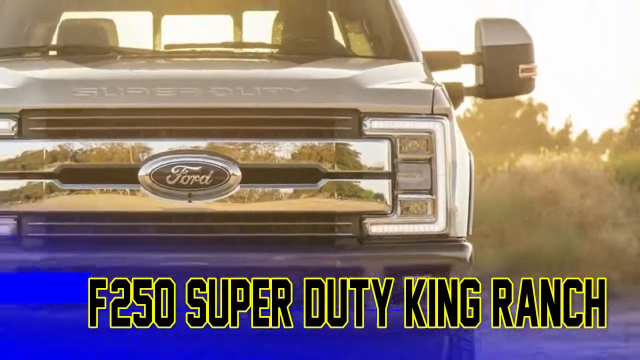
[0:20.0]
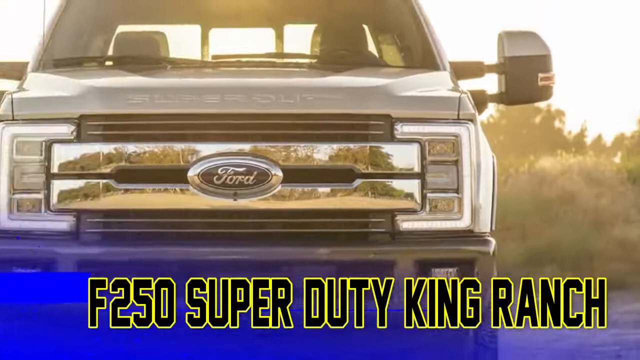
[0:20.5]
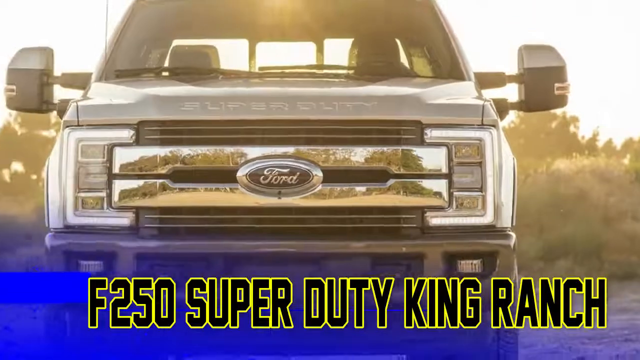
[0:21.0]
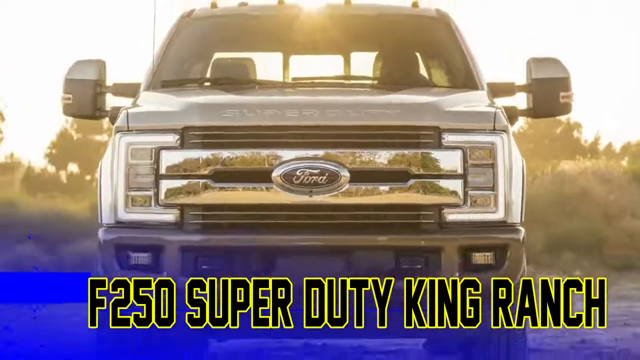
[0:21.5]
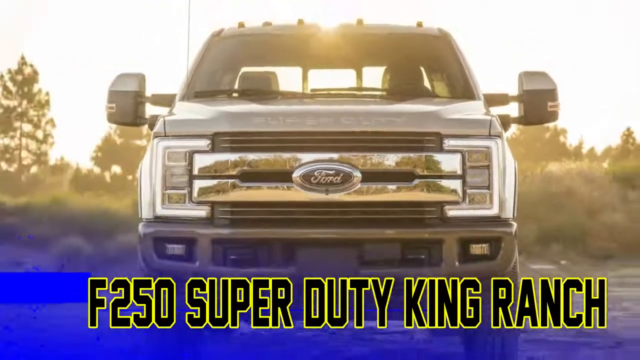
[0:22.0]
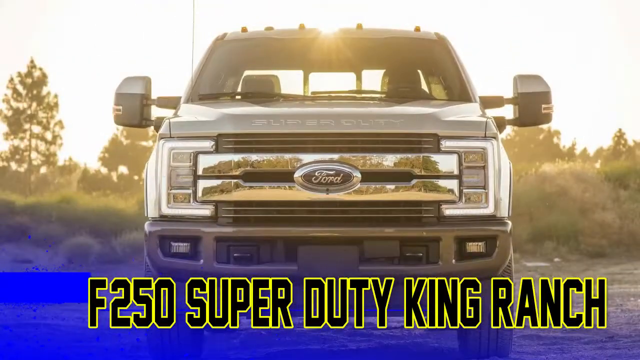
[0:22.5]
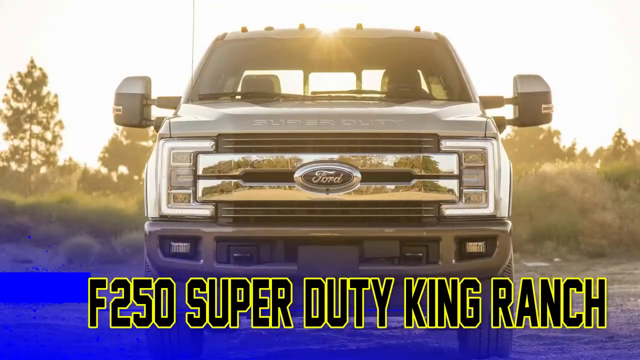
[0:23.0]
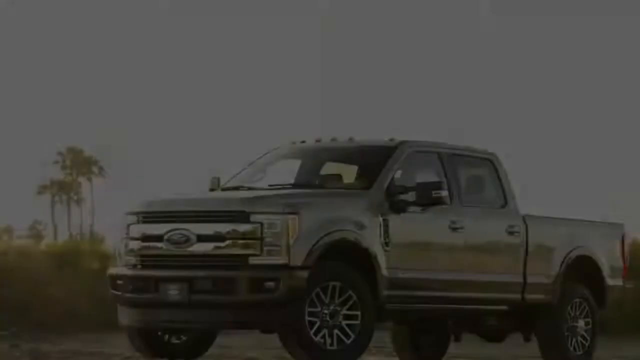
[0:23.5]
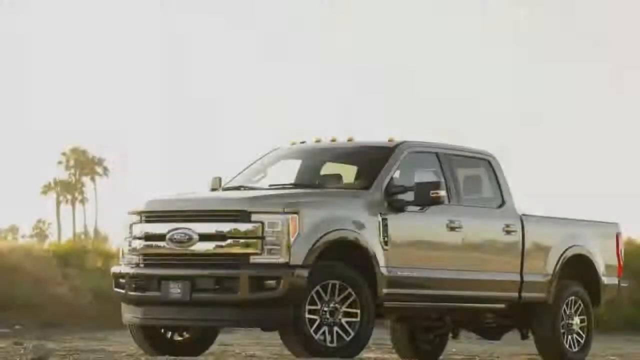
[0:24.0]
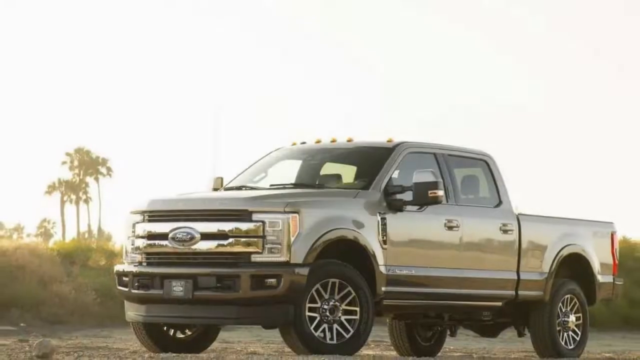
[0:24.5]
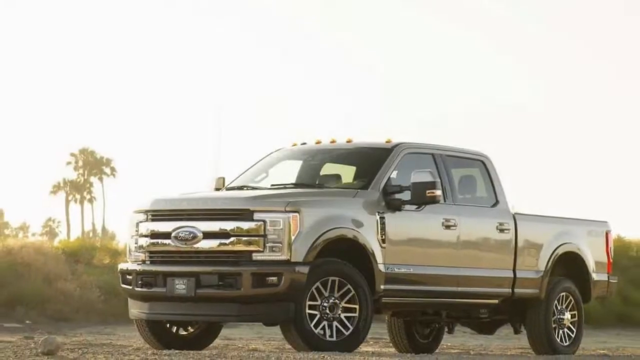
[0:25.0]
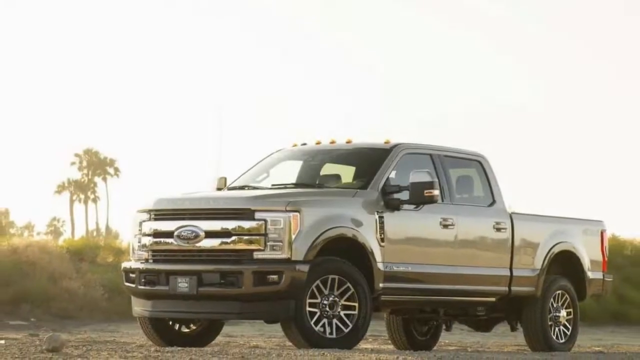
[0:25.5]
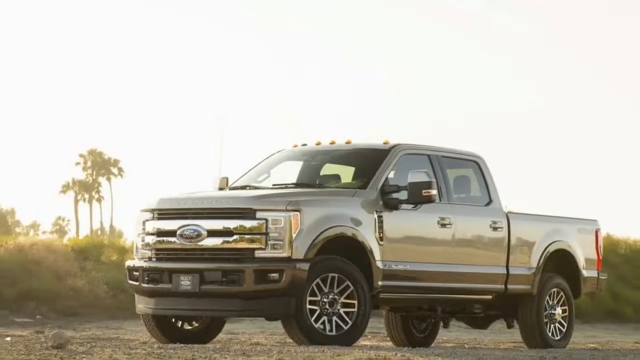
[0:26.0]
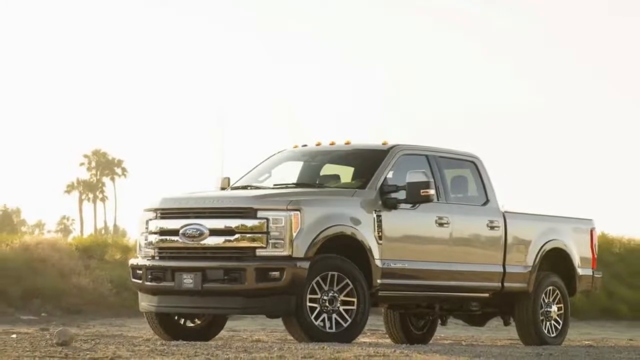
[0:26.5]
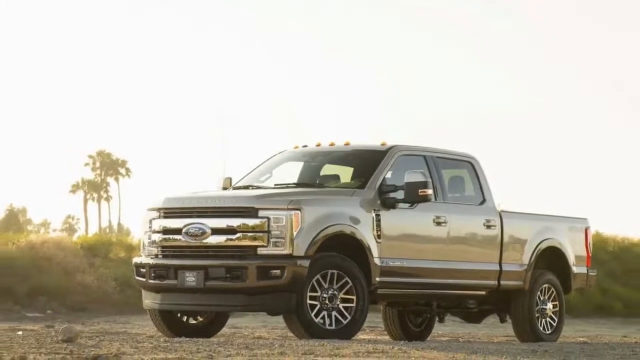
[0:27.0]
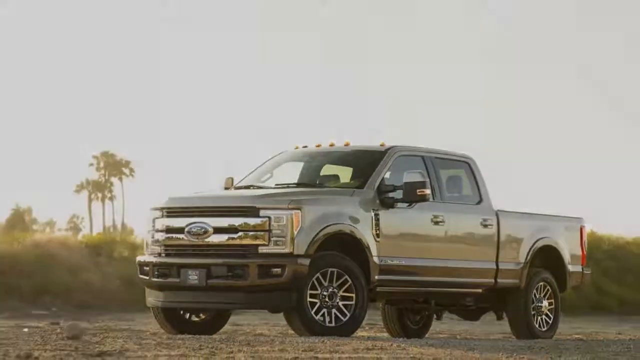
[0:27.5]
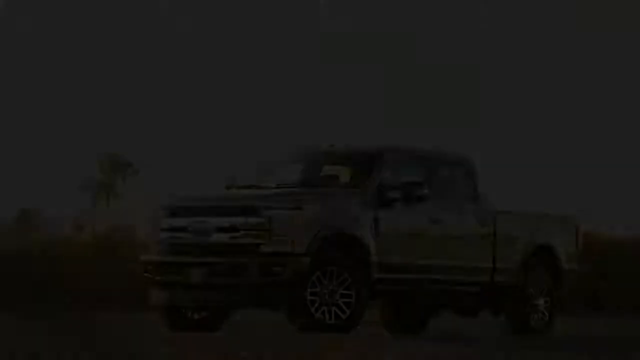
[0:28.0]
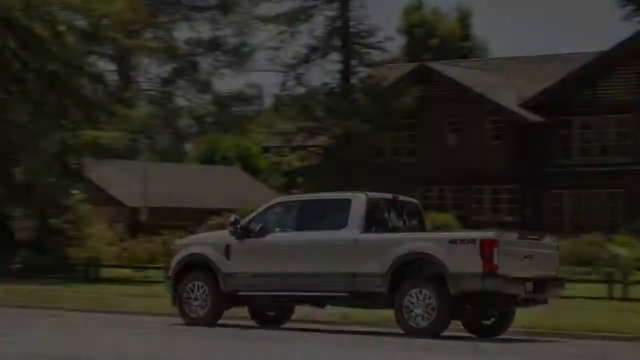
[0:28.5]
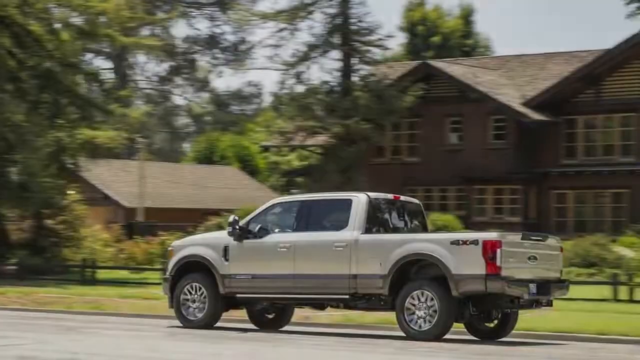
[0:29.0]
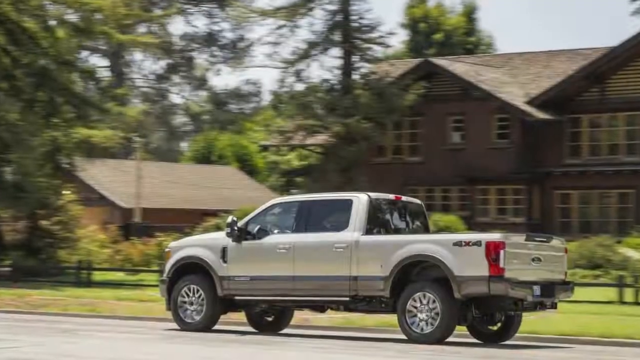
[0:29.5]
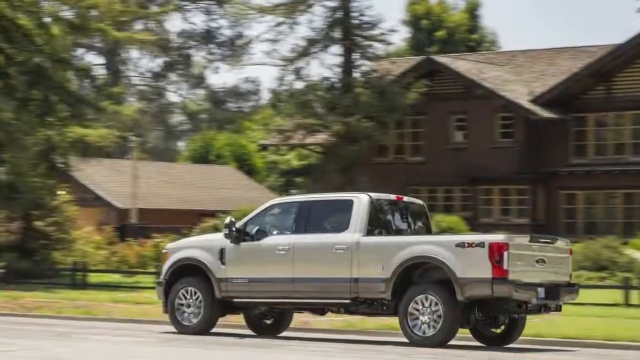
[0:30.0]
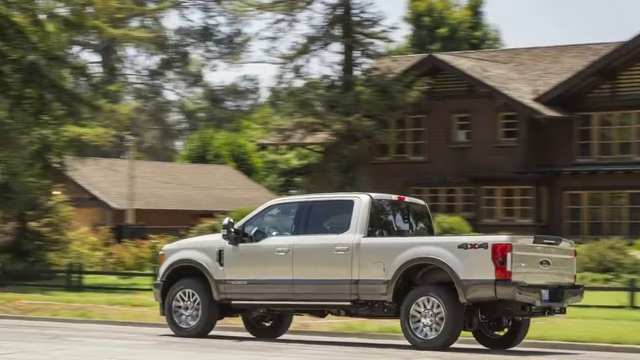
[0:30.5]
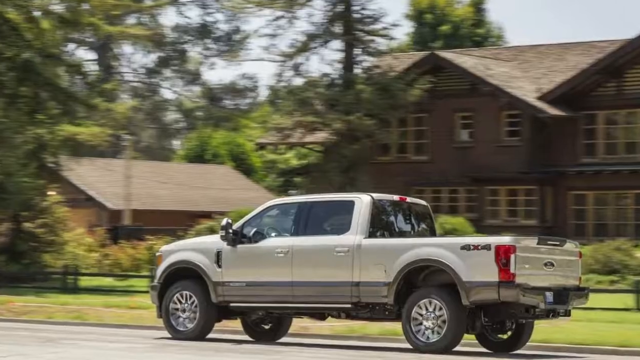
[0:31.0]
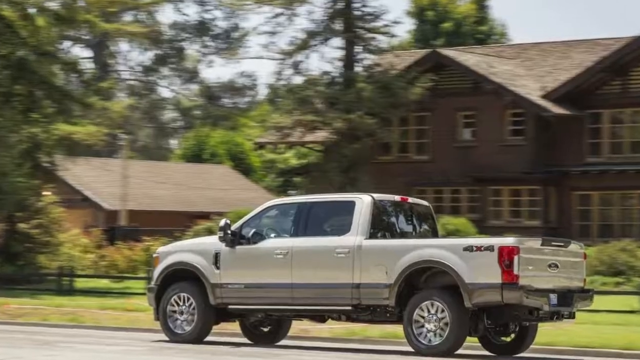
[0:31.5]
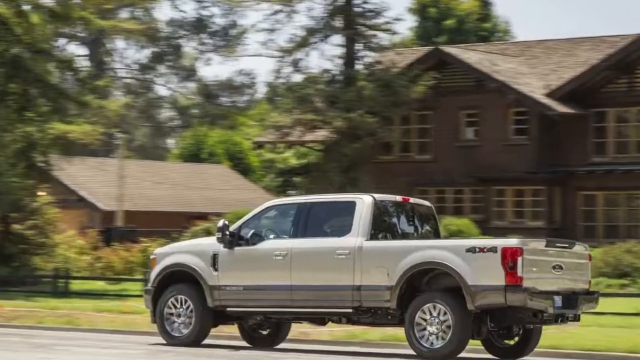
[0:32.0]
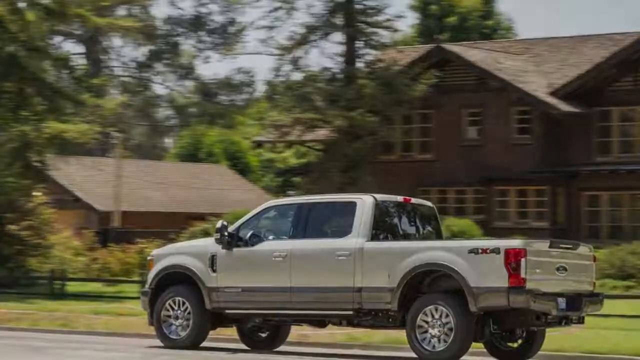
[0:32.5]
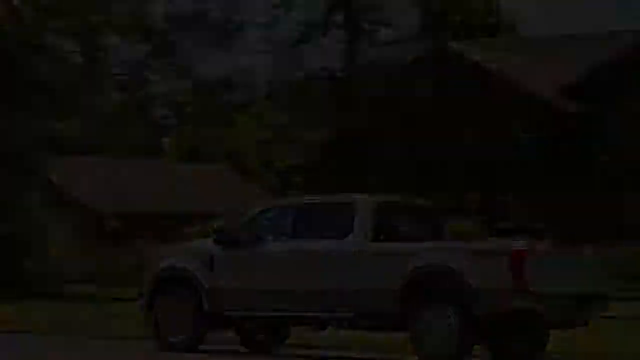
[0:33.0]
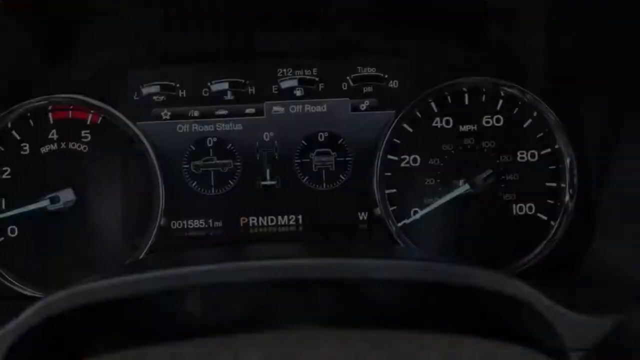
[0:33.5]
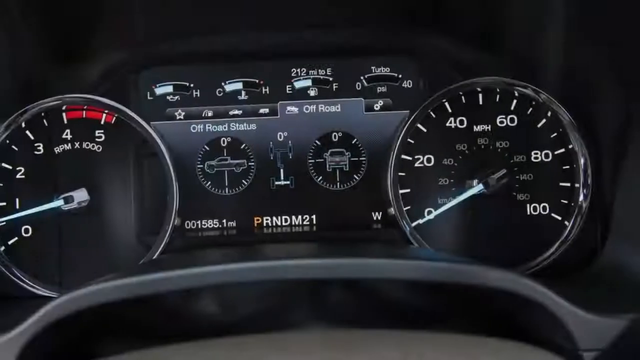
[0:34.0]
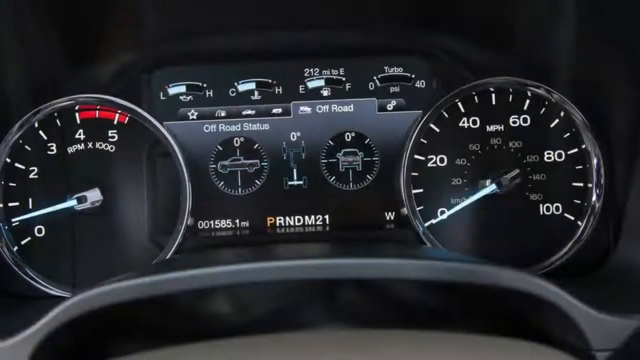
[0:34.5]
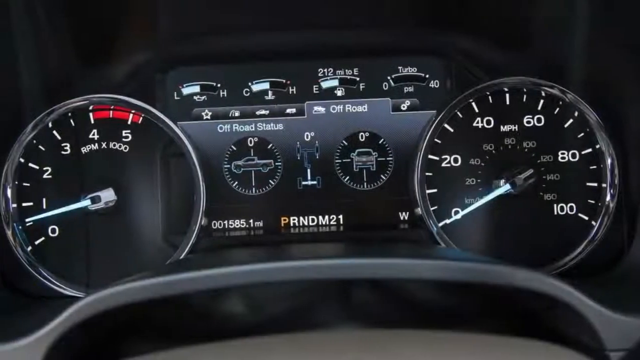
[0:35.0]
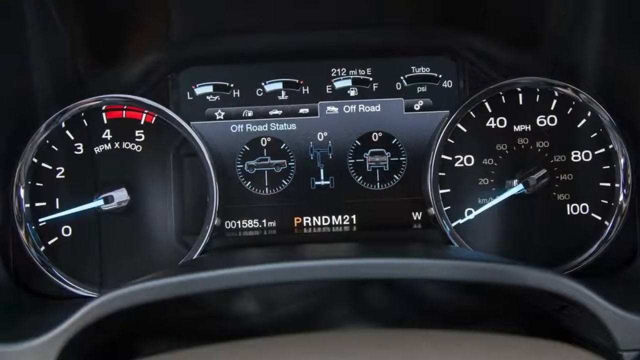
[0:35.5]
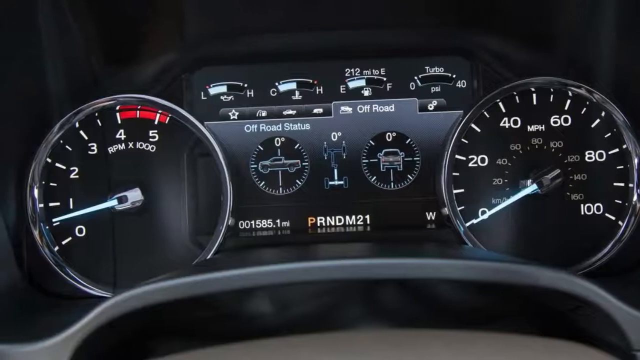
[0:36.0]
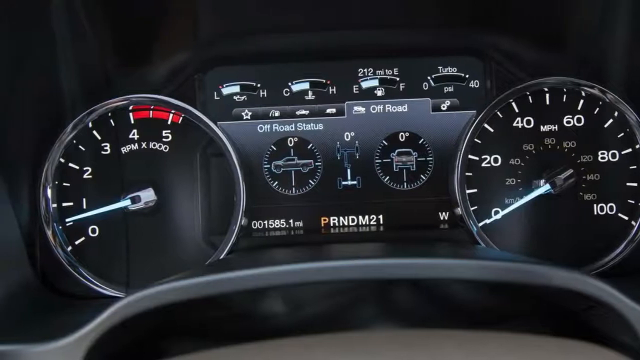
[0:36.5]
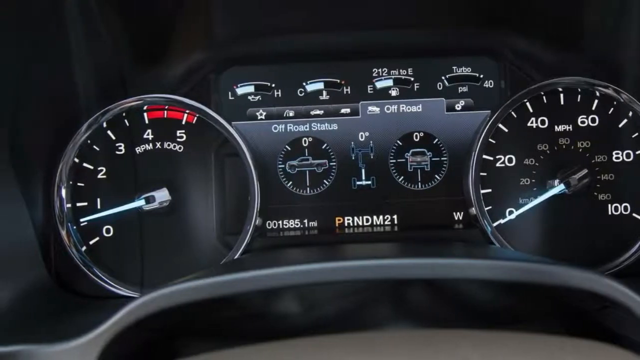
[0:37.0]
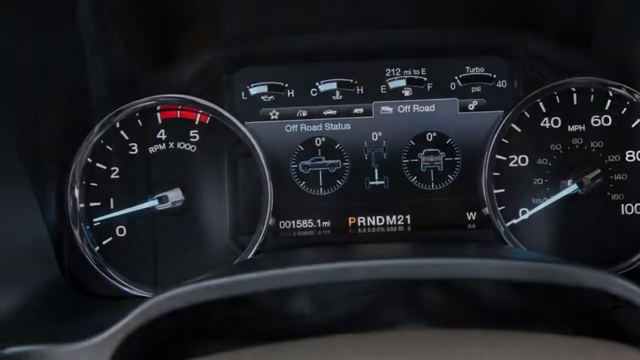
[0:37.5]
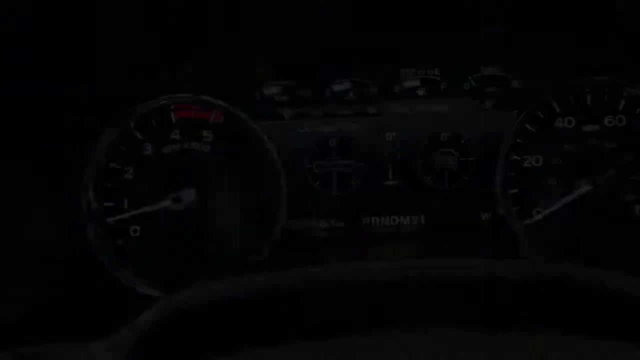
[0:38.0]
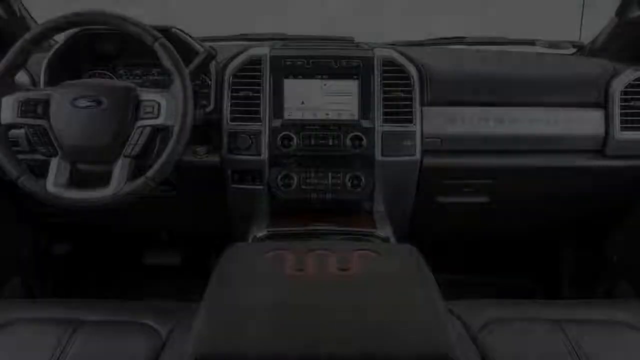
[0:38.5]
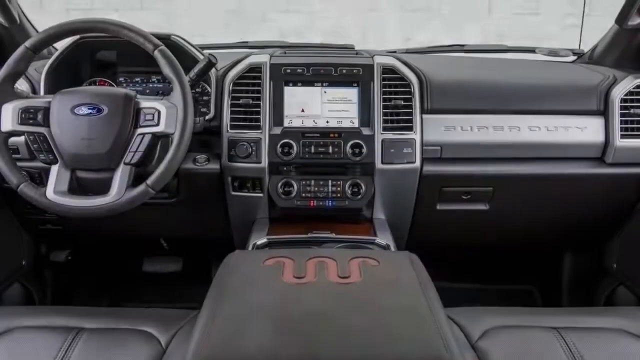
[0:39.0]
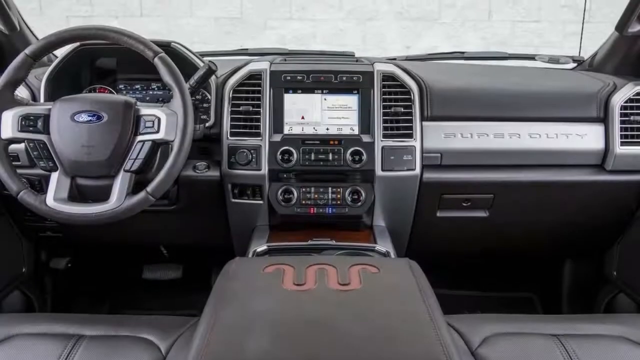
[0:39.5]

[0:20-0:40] The front of the heavy-duty truck is shown, with a very bright chrome effect across the radiator grille. Behind it is a background of trees and a very light-coloured sky. The picture scrolls in from right to left until the truck is in the middle of the picture, with trees standing on their own to the right. At the bottom, the truck appears to be standing on hard ground. The screen goes black and comes back, cutting to a view from the front driver's-side wing of the truck, which is a sort of light-coloured, silverish truck with two doors at the front and two at the rear, a crew cab with an open pickup back. The picture scrolls out slightly to show the full truck in front of a background of tall trees and a hedge. The wheels are diamond-cut alloys, slightly turned to the right so that they face the viewer directly, since the truck is slightly at an angle.